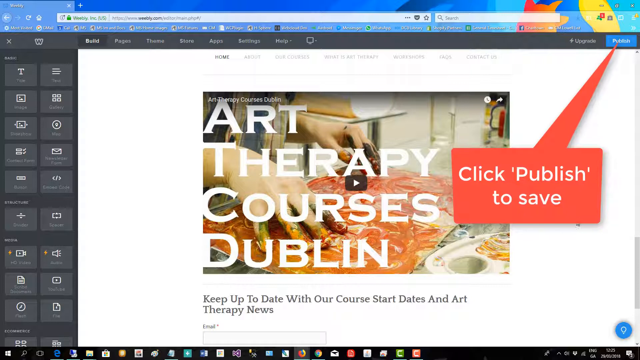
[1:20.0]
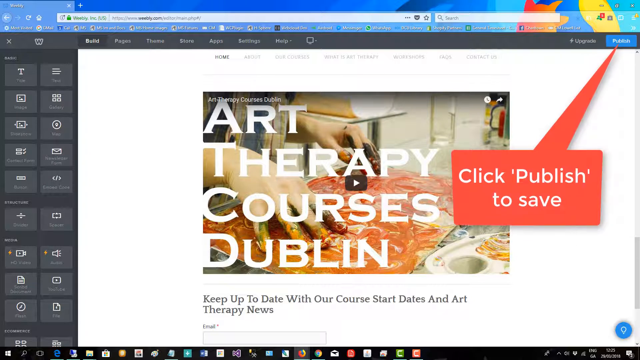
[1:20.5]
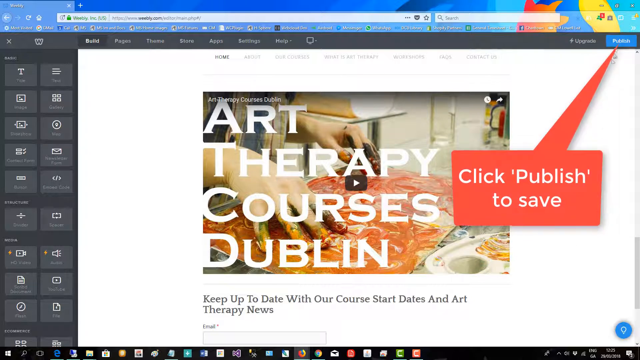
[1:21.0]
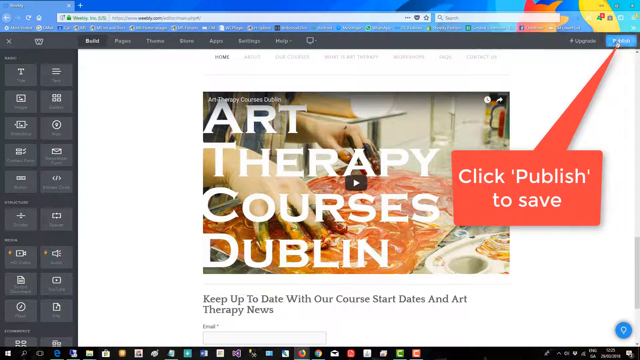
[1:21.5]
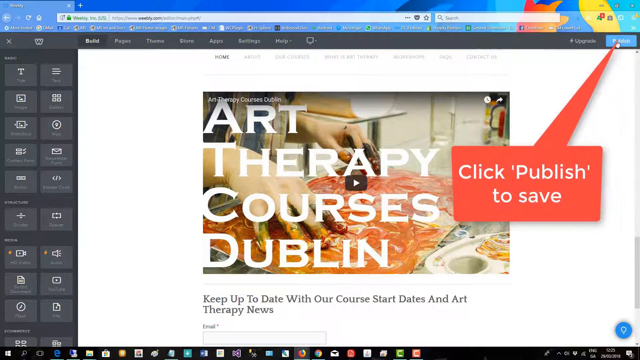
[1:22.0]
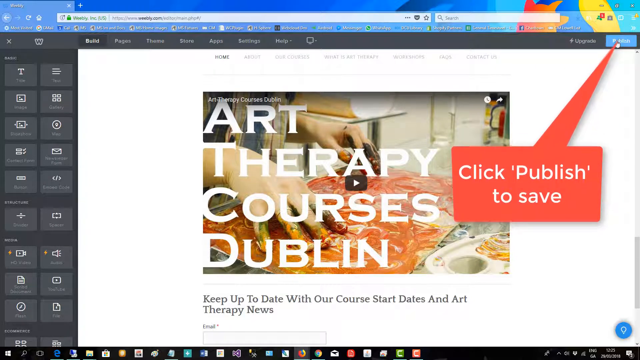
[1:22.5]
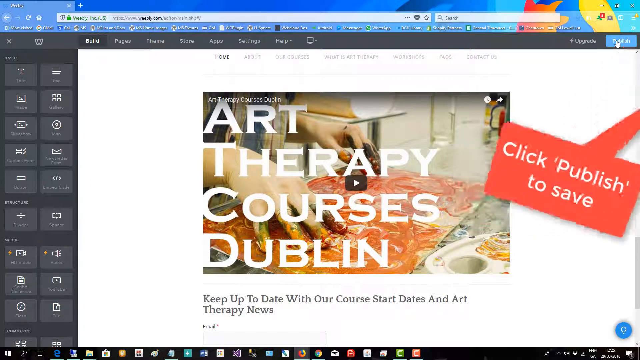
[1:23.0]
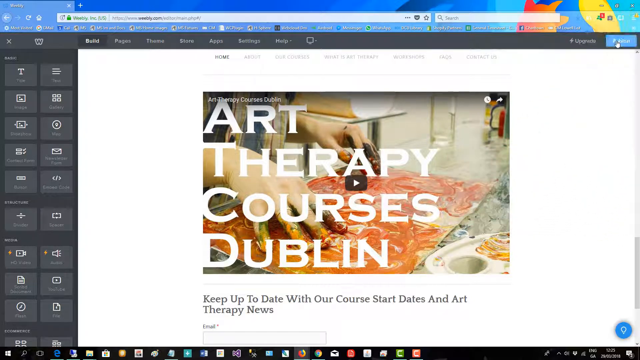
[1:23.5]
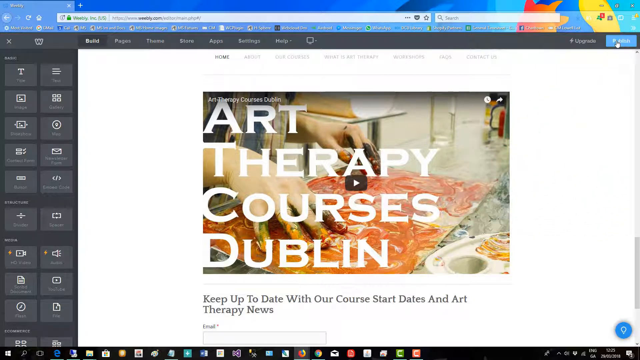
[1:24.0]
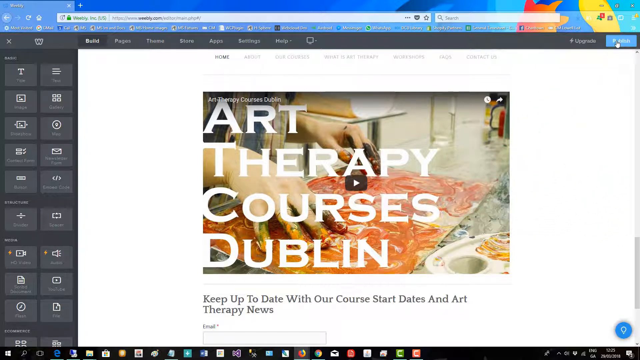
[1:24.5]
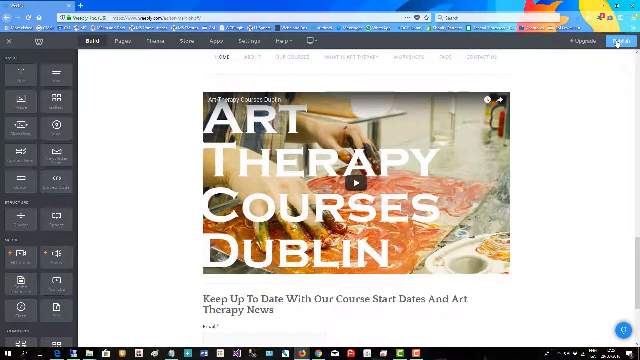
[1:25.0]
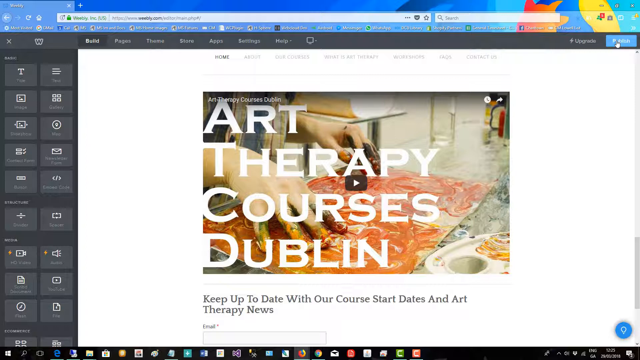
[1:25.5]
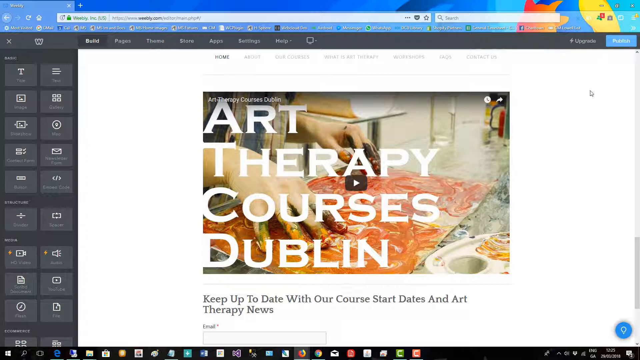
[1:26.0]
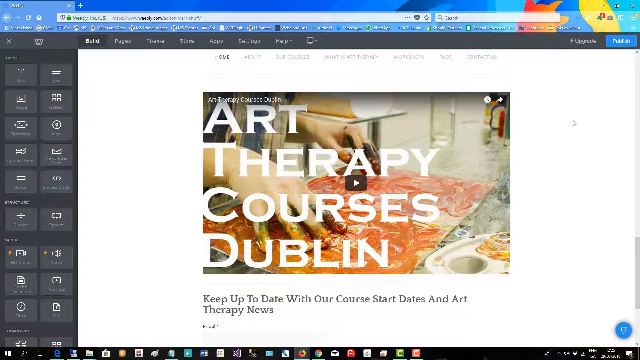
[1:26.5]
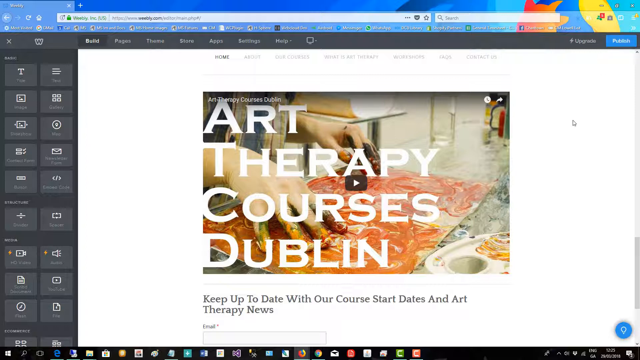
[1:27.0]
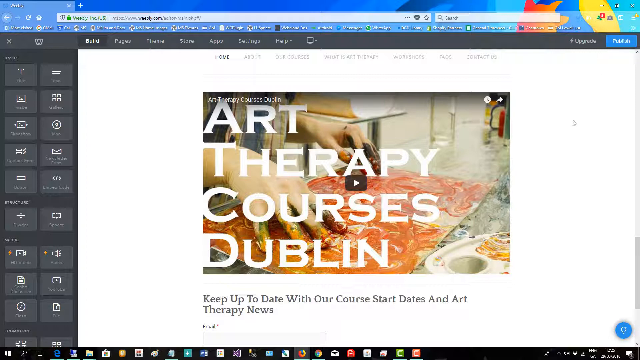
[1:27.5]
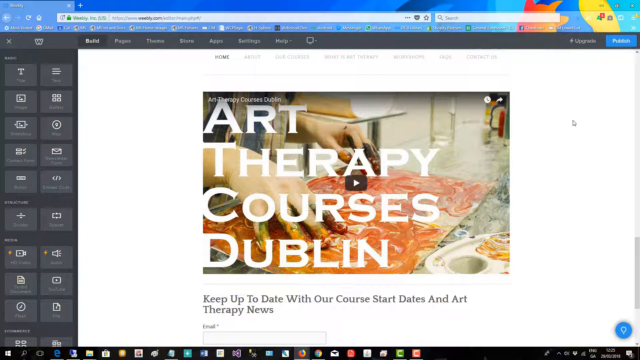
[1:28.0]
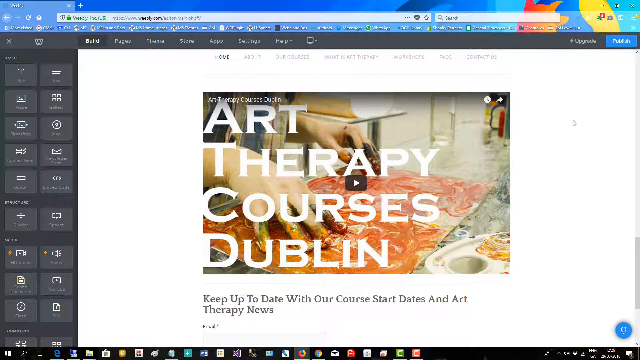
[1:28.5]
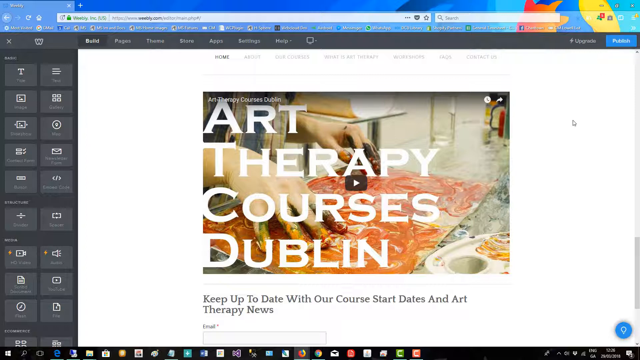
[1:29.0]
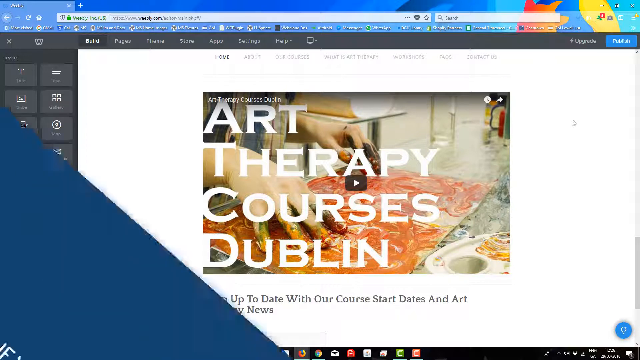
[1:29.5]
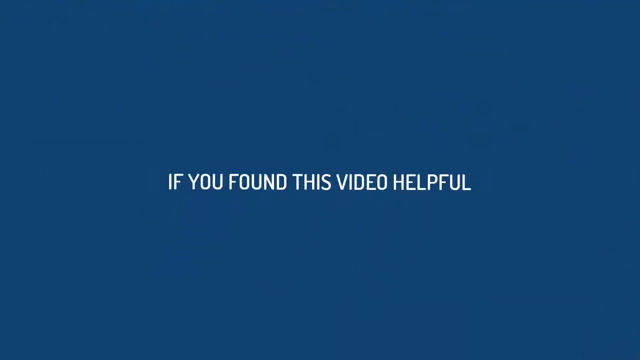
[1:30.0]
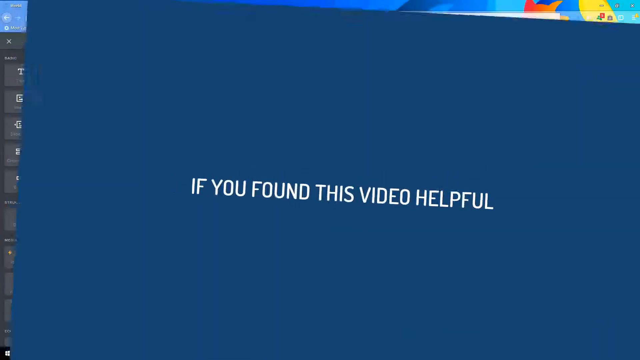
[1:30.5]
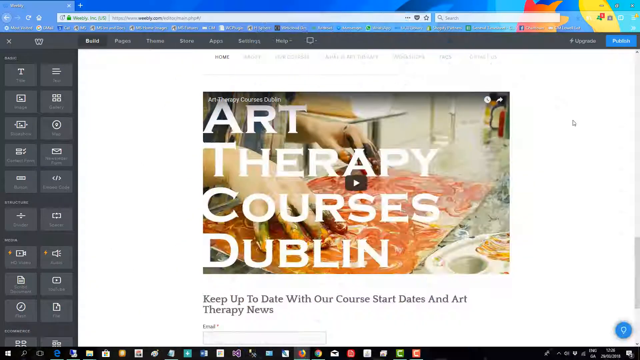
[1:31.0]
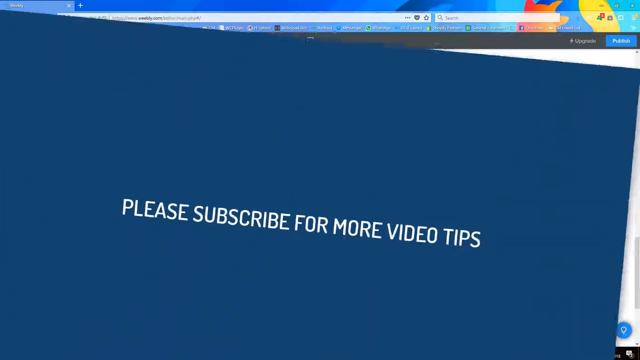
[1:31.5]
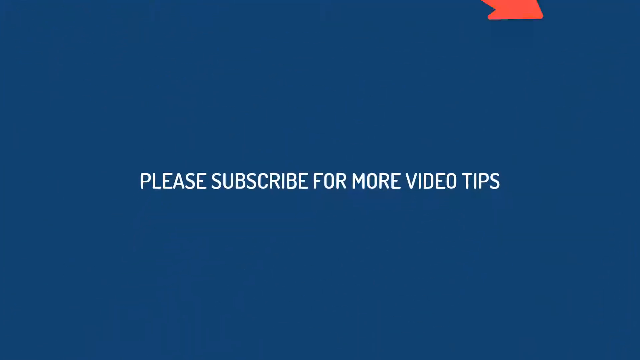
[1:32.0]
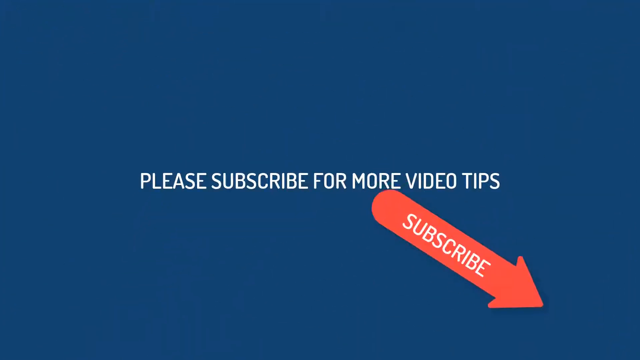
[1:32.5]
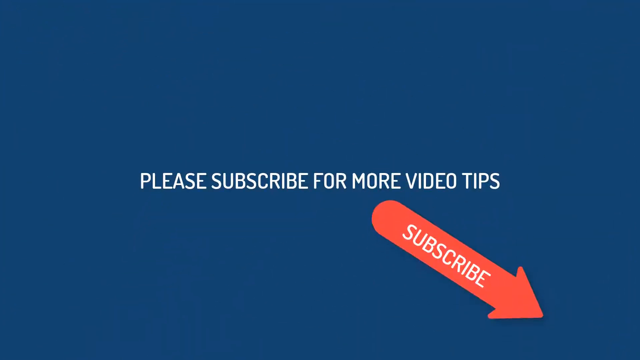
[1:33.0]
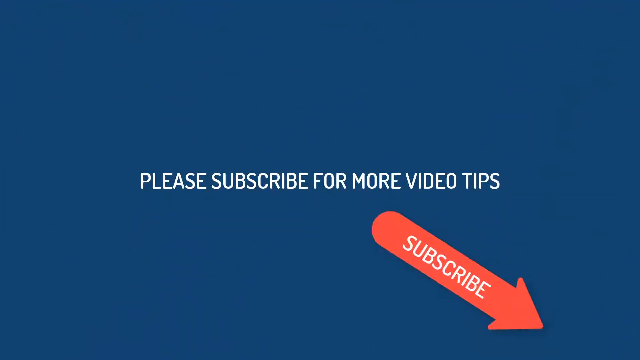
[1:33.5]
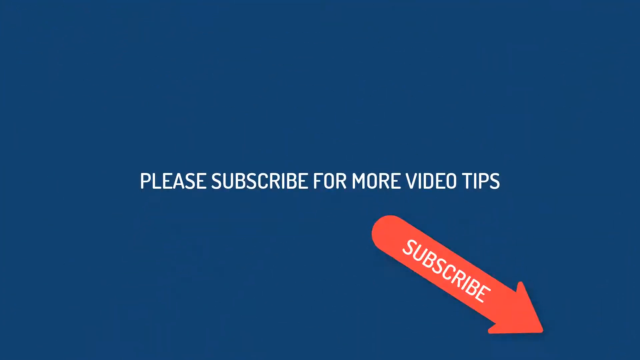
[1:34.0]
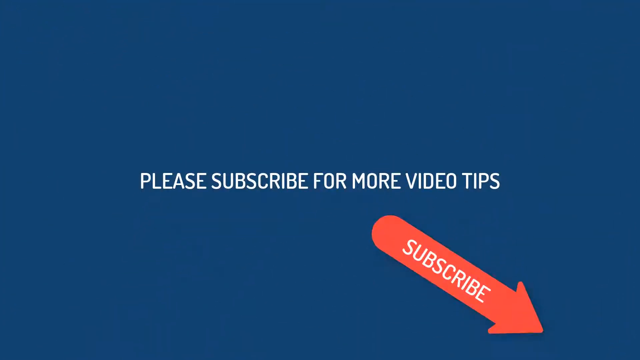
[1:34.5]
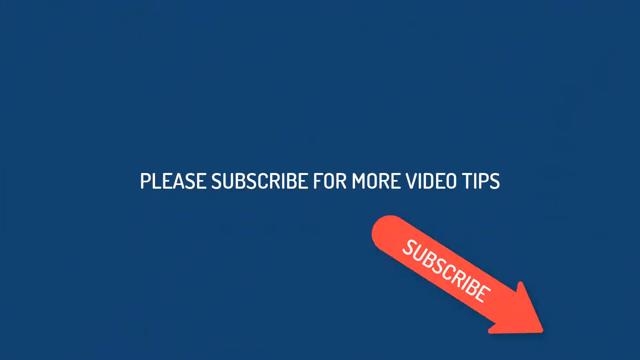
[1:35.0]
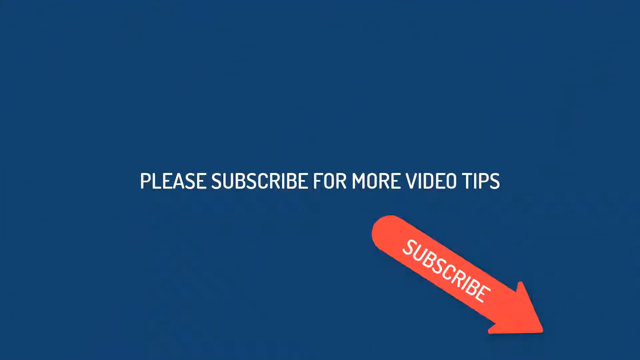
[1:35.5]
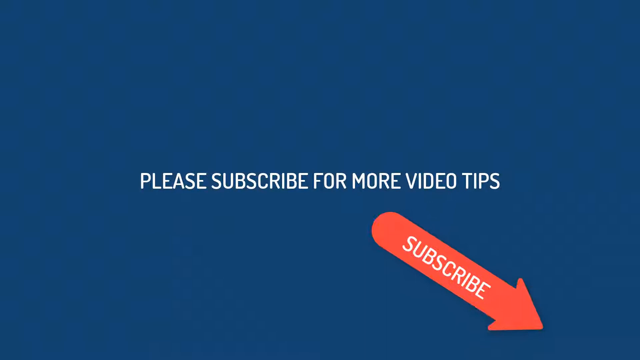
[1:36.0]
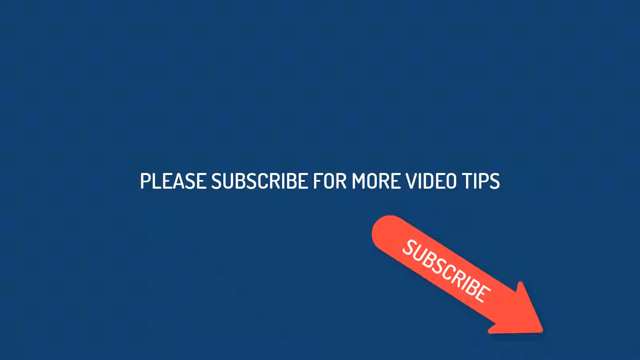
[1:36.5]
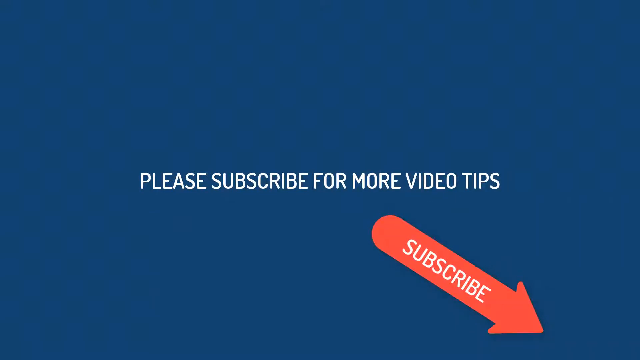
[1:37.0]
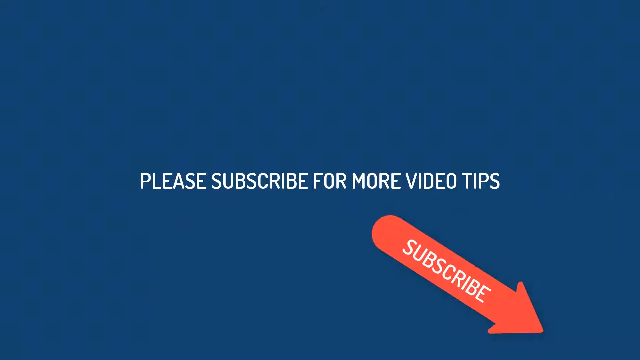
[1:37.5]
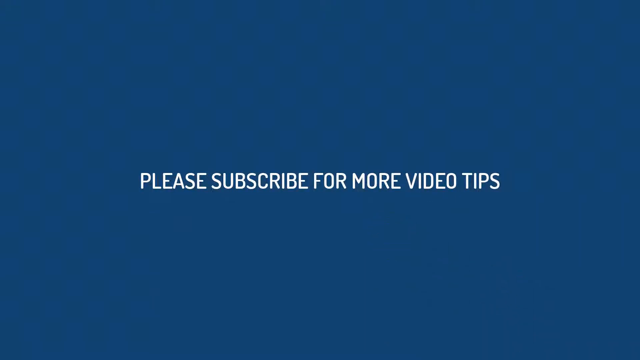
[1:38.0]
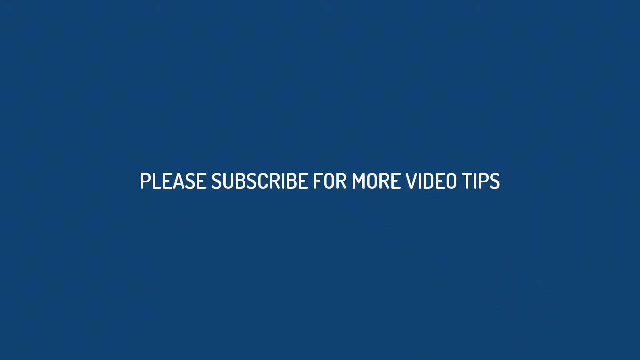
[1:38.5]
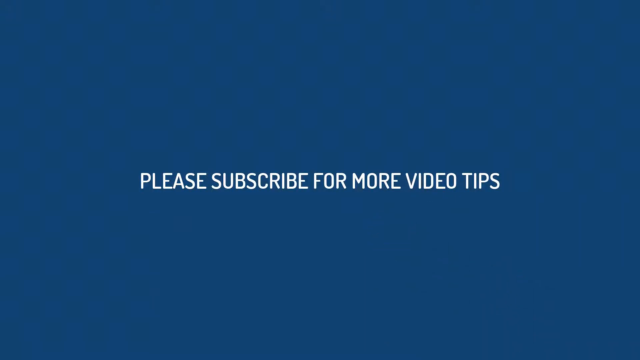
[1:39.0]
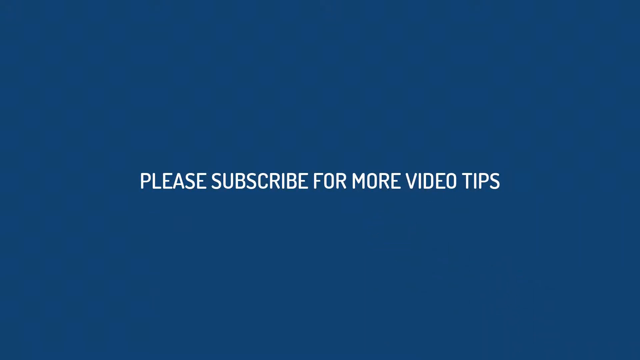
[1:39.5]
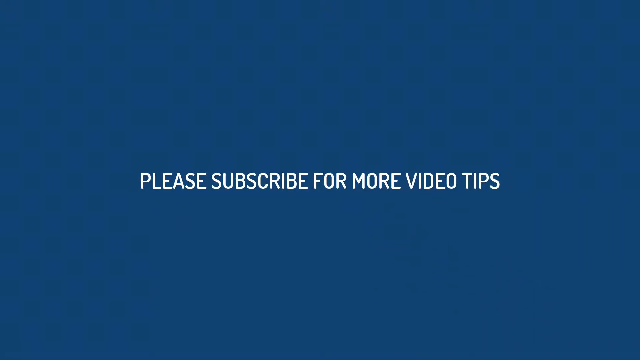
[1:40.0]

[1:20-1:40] The cursor goes to a small box in the top right with the word "publish," and an arrow points at that box with the text "click publish to save." A video displayed on YouTube has white text reading "Art Therapy Courses Dublin" with other information below it. The video then changes to white text on a blue background reading "if you find this video helpful," followed by text reading "please subscribe for more videos tips," with a red arrow labeled "subscribe" showing how to subscribe.